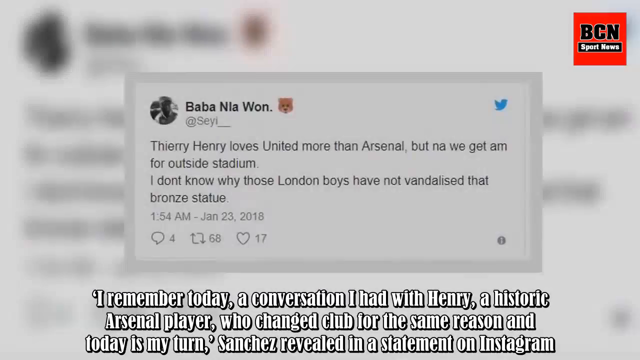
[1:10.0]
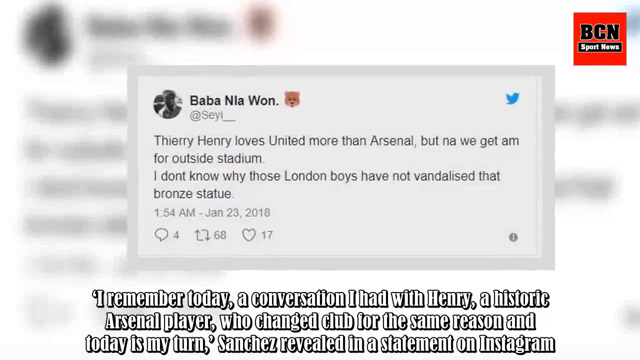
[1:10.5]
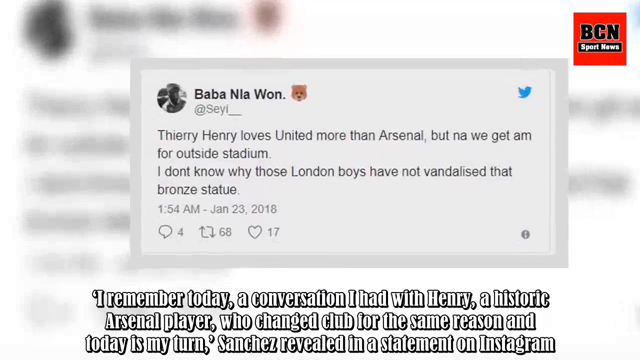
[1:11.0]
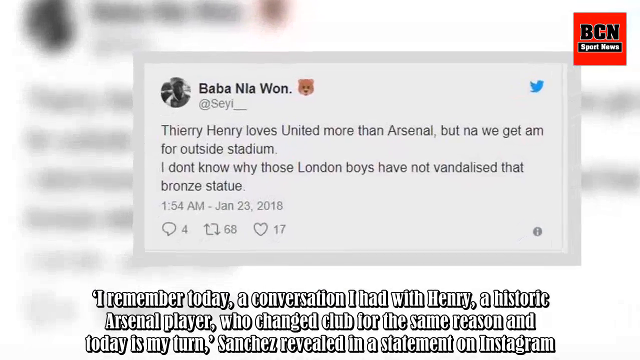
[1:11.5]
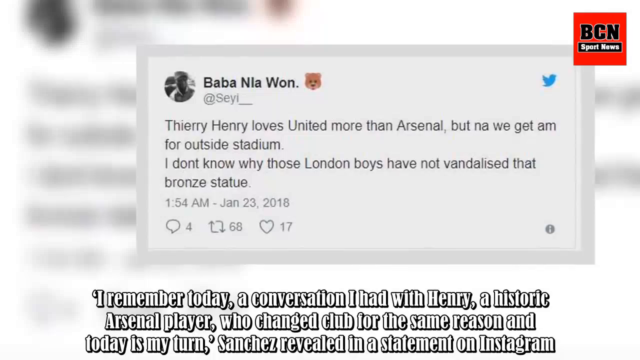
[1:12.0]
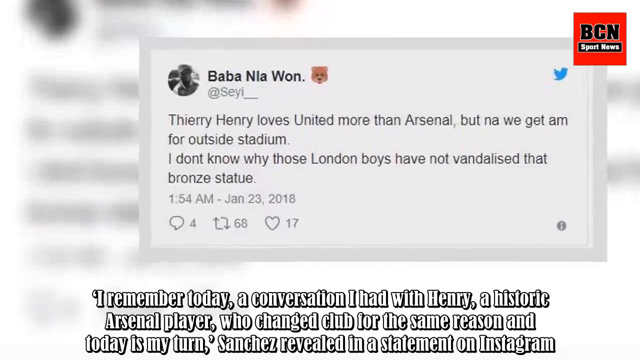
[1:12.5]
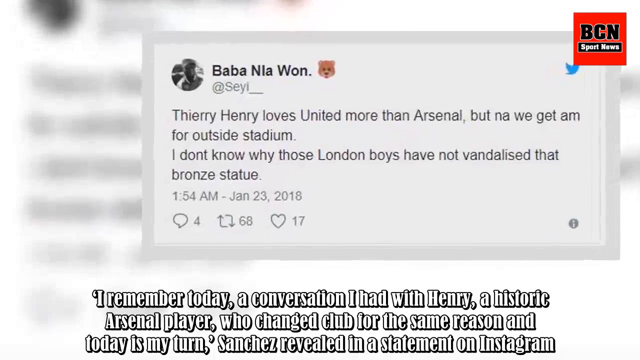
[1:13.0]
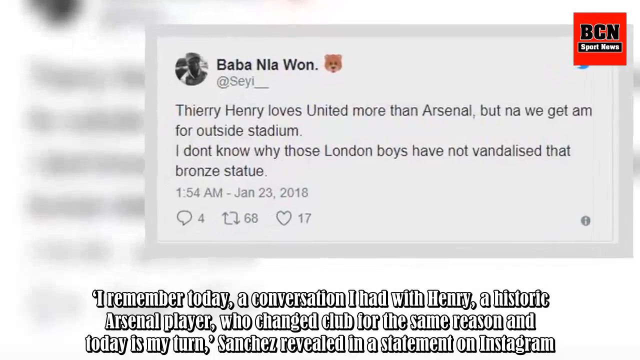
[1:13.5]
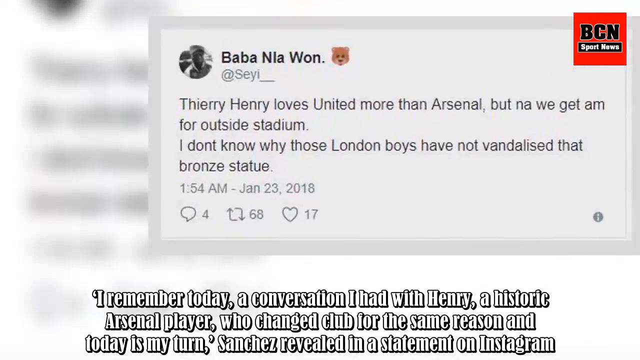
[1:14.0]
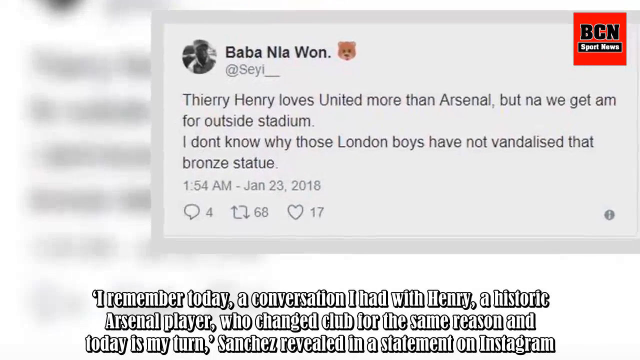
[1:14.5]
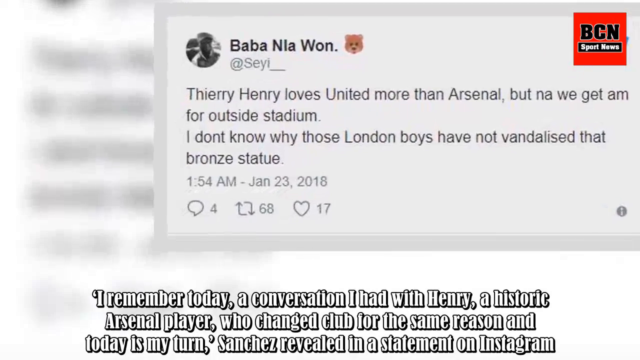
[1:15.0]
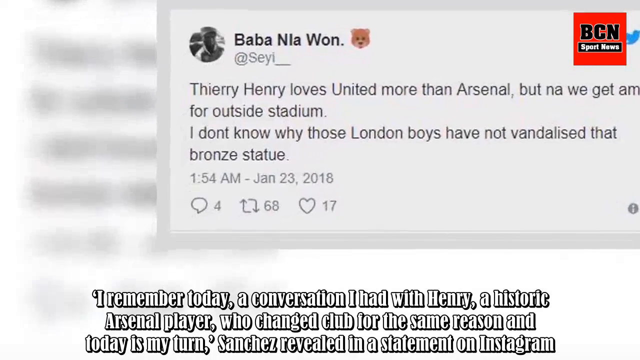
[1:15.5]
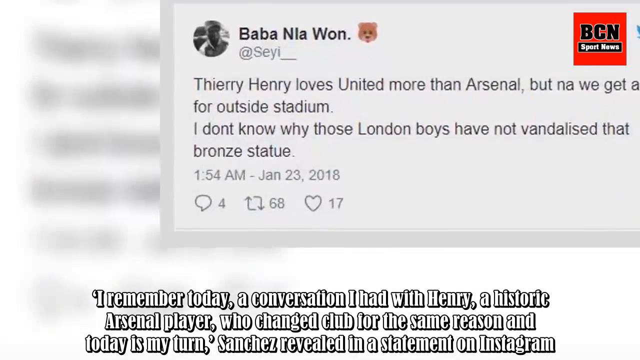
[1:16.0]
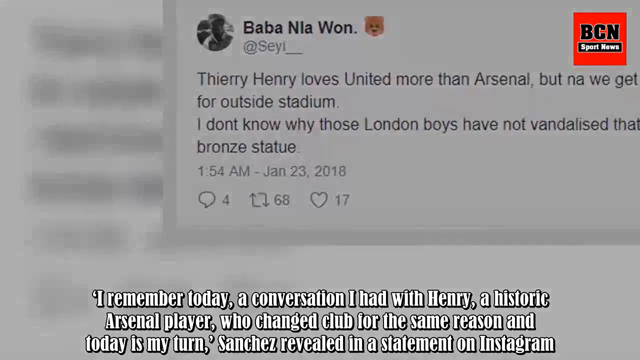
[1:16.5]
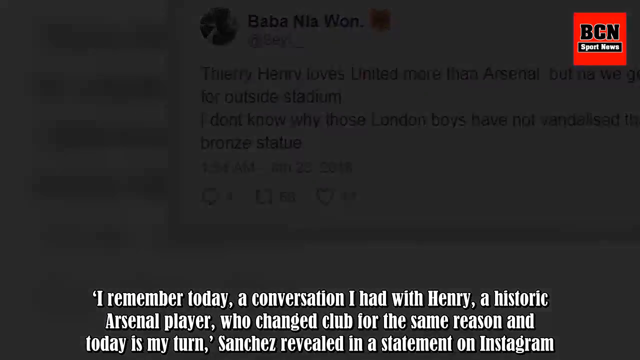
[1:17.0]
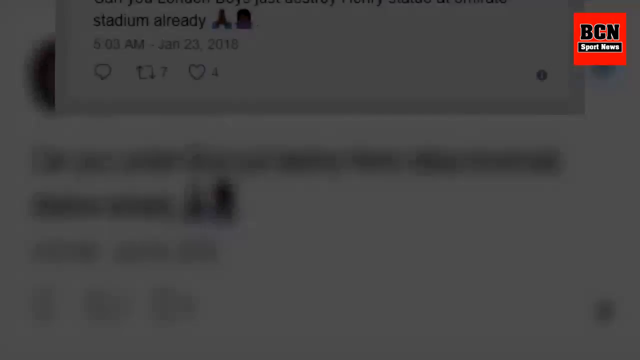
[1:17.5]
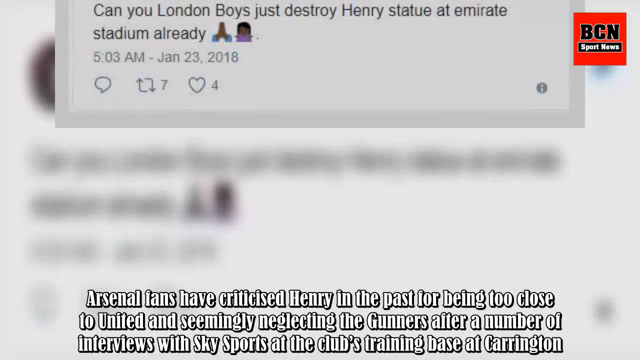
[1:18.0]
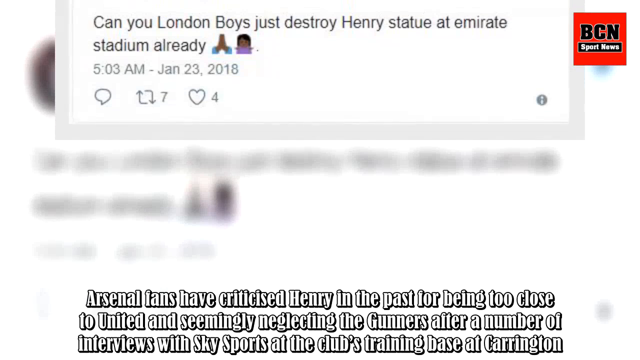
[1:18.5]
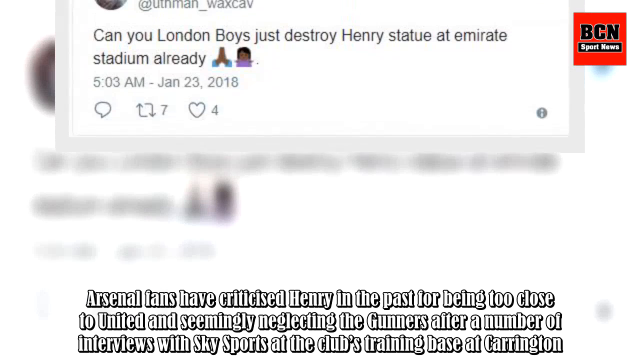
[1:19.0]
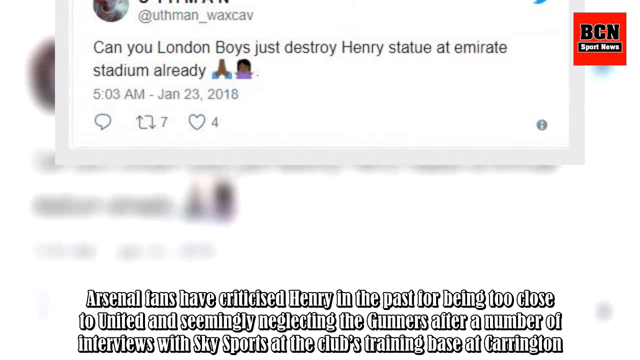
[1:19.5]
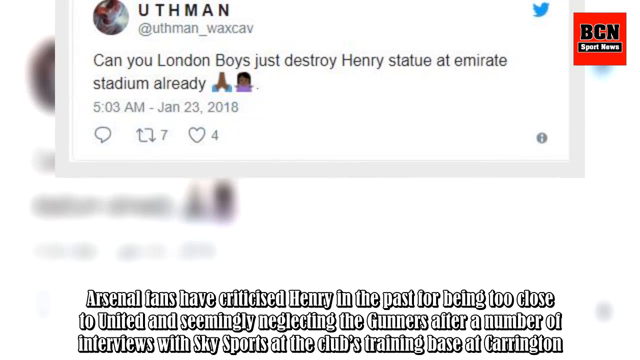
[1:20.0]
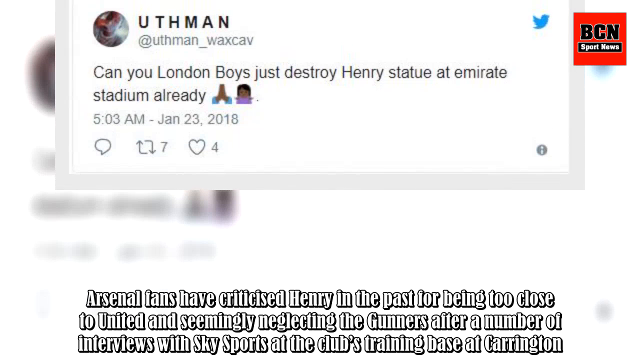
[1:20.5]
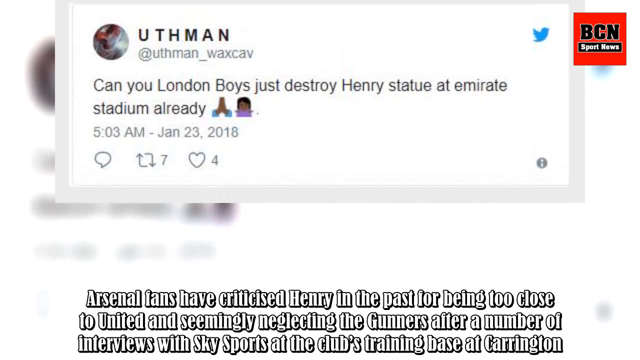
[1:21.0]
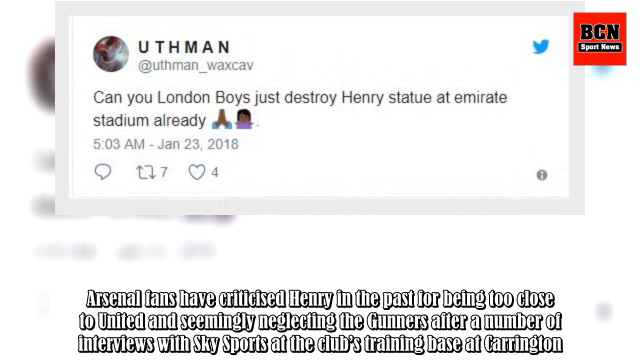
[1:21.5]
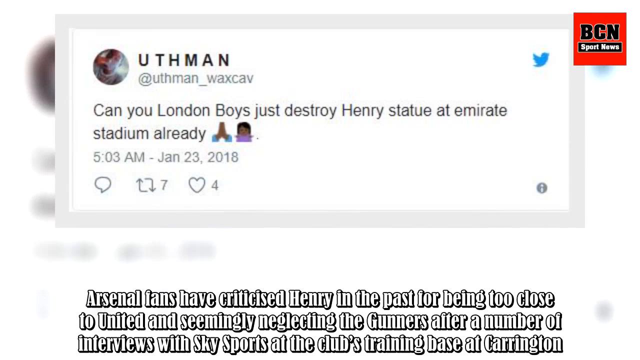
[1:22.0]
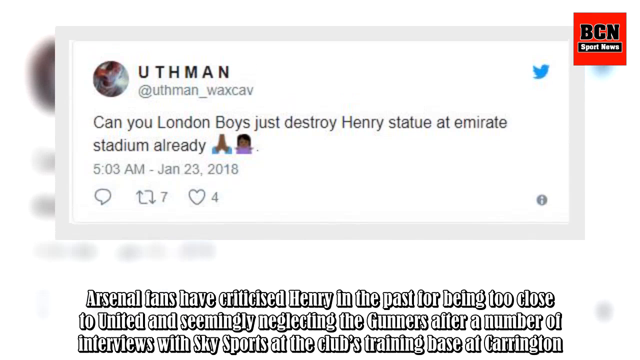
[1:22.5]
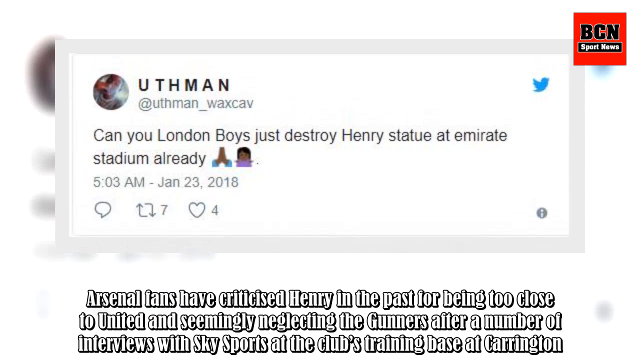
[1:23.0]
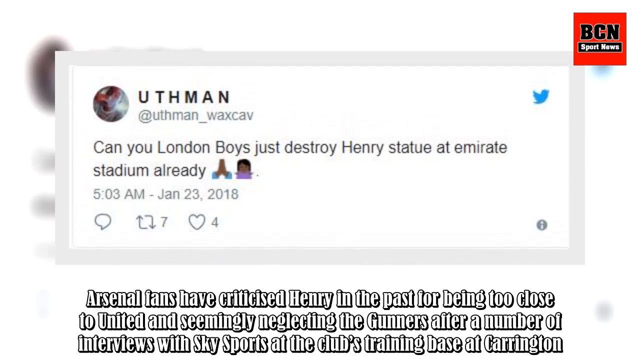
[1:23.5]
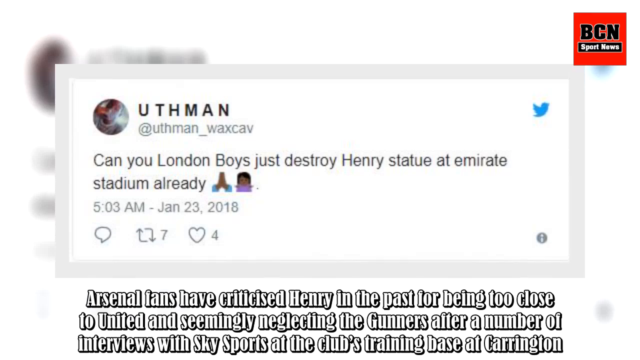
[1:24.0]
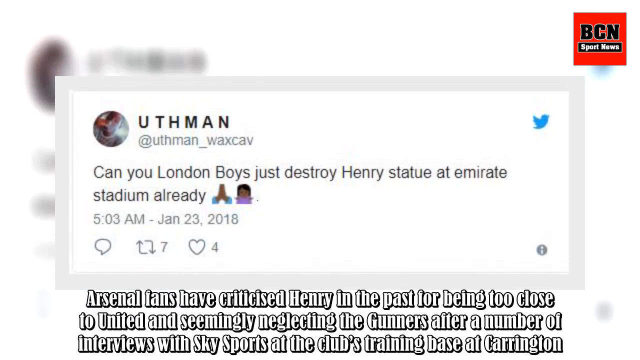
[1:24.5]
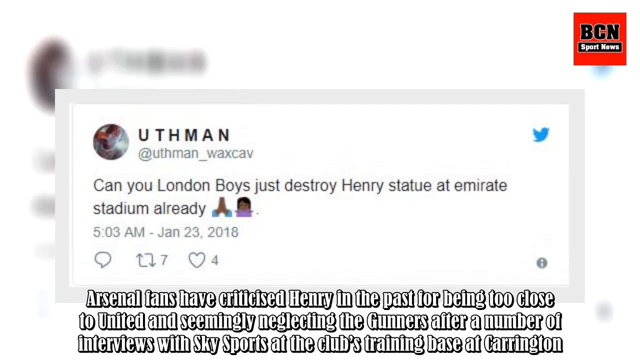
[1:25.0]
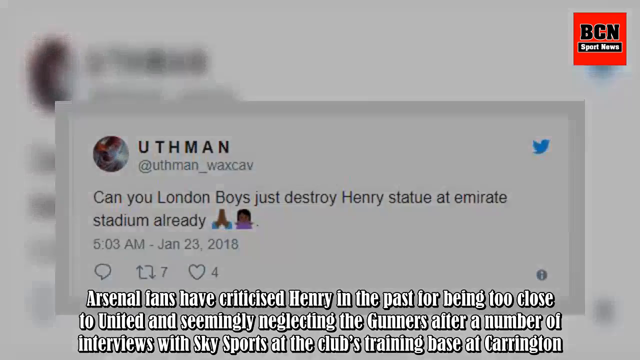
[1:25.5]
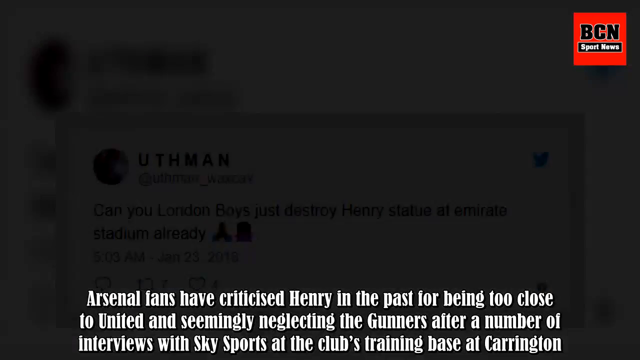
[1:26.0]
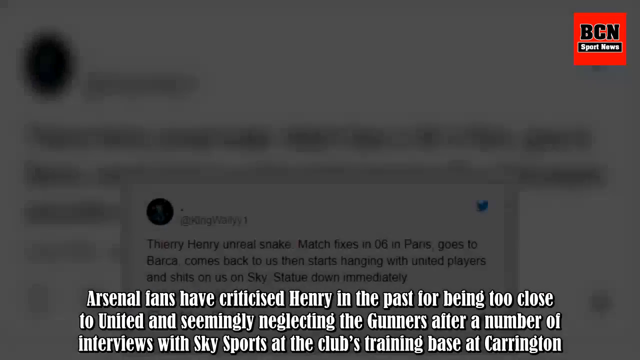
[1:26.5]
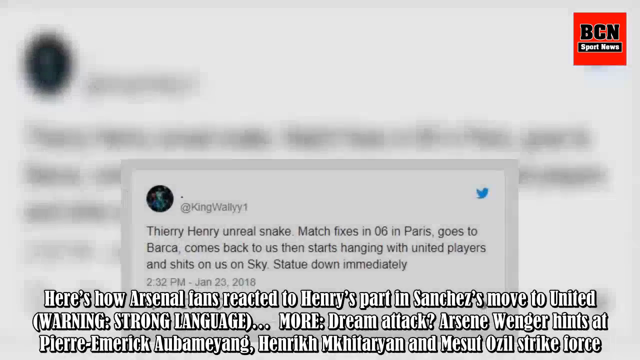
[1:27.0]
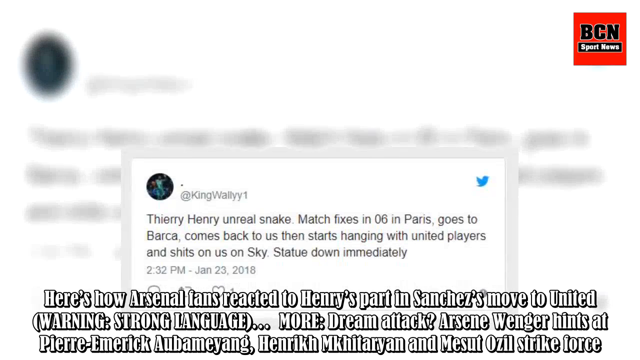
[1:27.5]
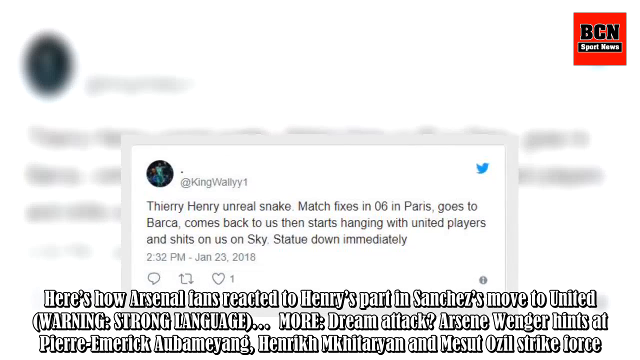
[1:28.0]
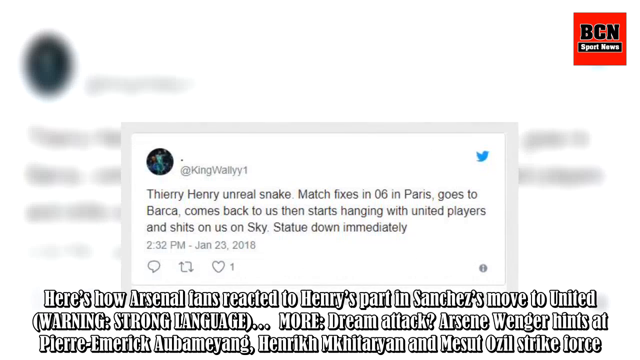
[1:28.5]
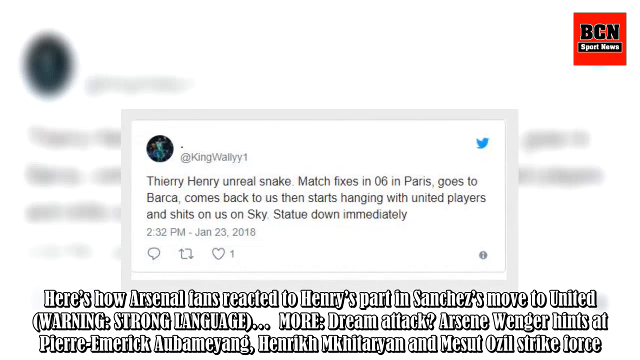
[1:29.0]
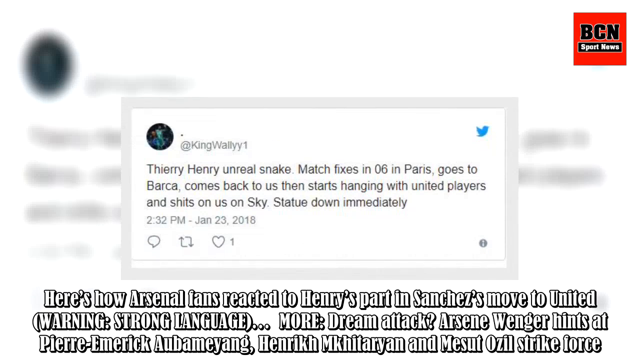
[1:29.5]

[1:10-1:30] More tweets about the statue keep appearing on the screen, one after another, with many people responding to the post. A message at the bottom of the screen passes too quickly to read.